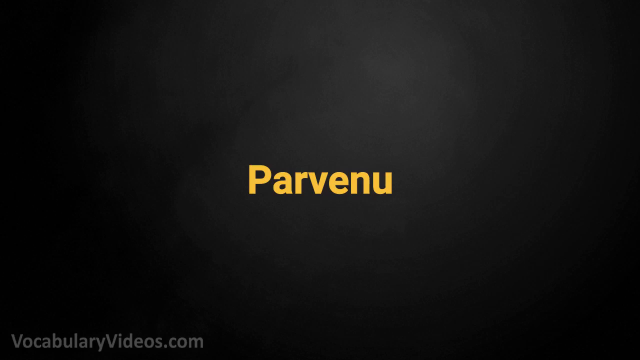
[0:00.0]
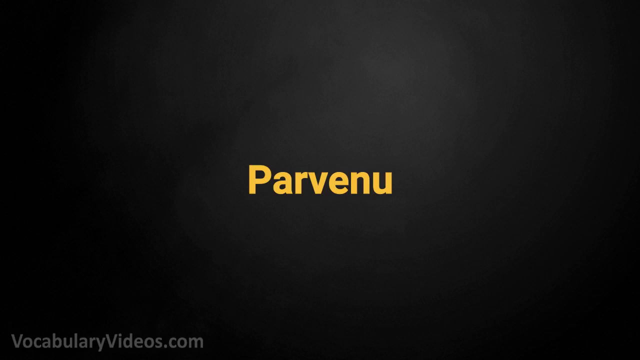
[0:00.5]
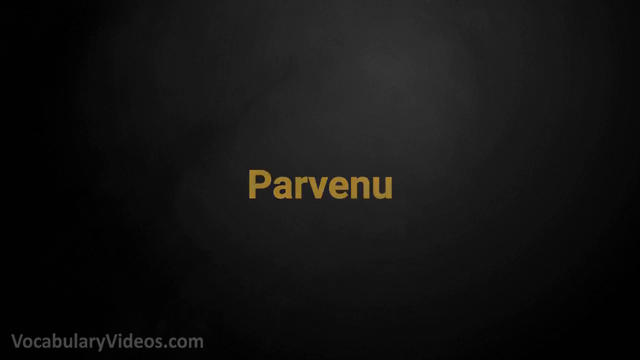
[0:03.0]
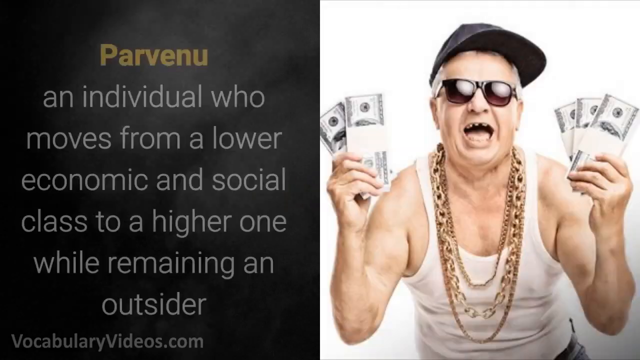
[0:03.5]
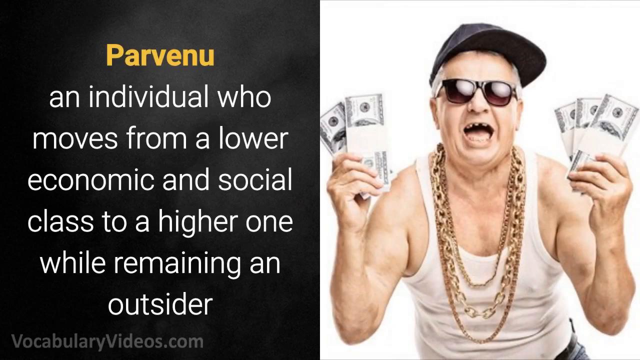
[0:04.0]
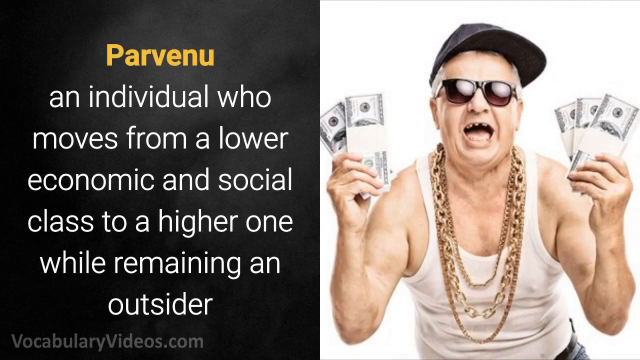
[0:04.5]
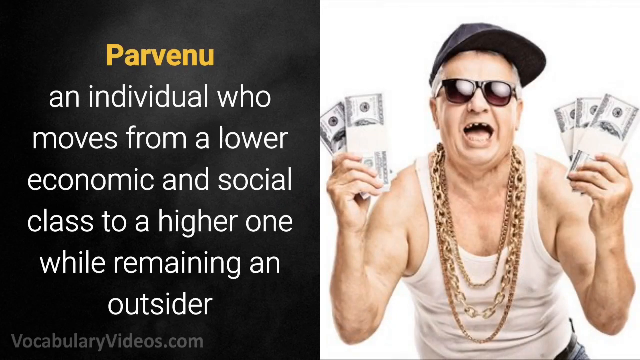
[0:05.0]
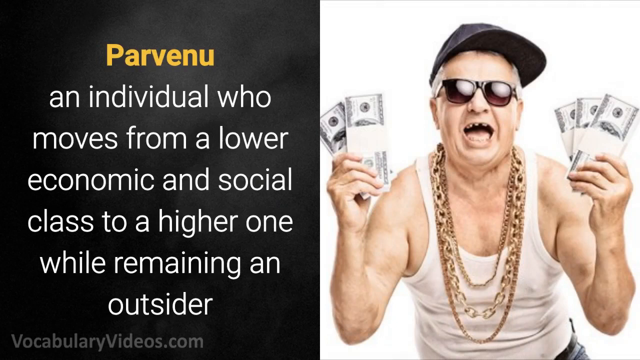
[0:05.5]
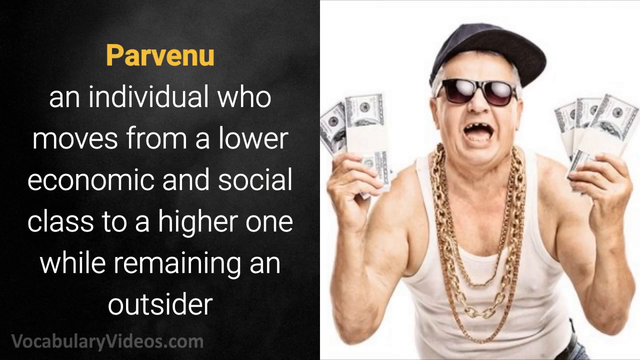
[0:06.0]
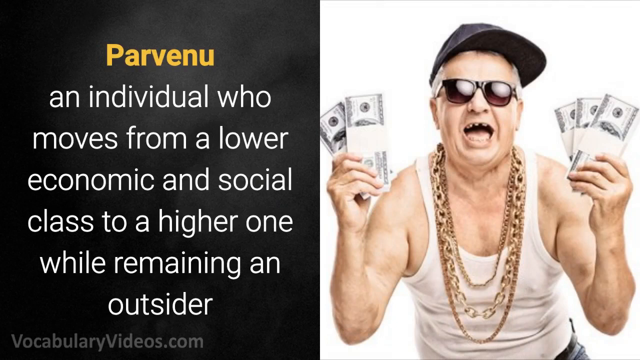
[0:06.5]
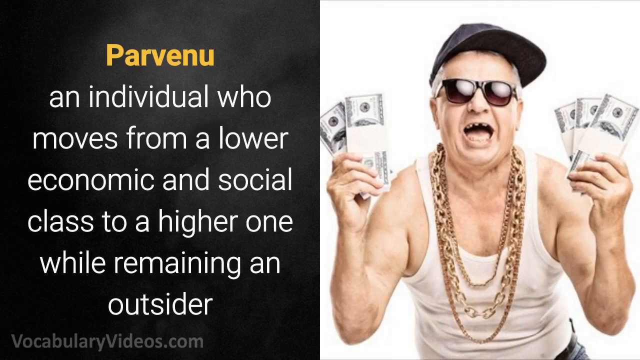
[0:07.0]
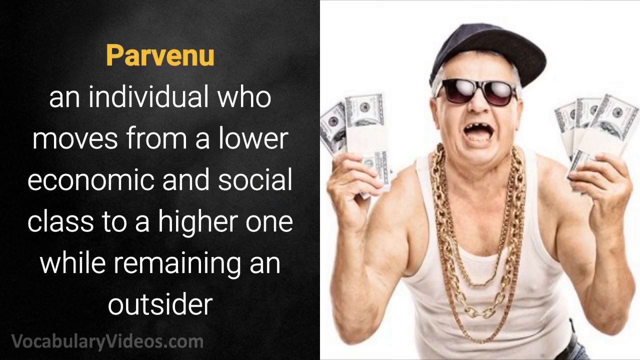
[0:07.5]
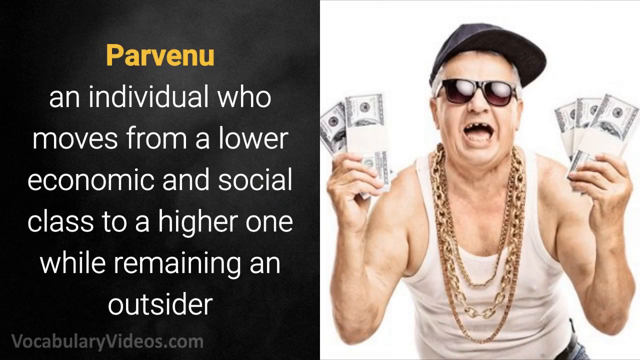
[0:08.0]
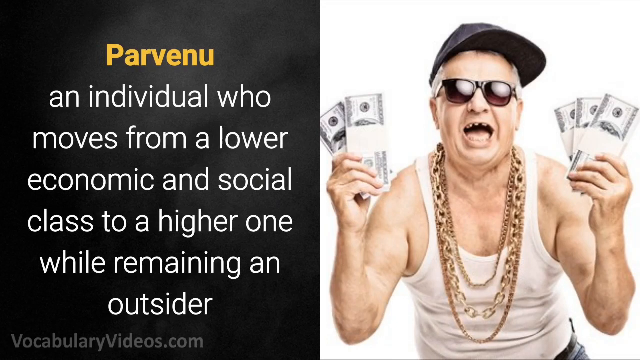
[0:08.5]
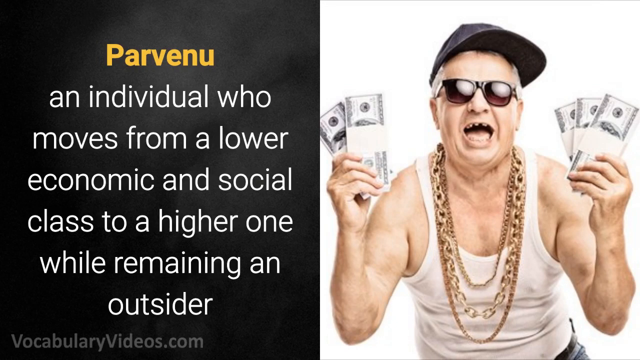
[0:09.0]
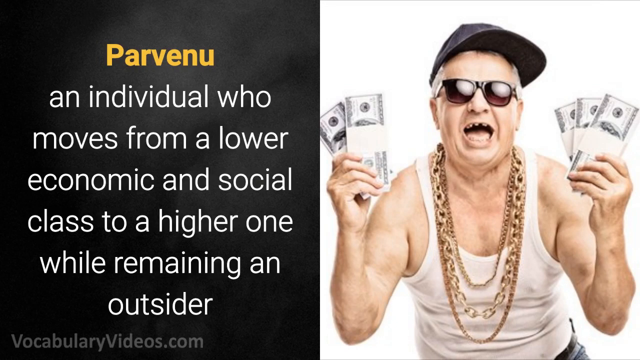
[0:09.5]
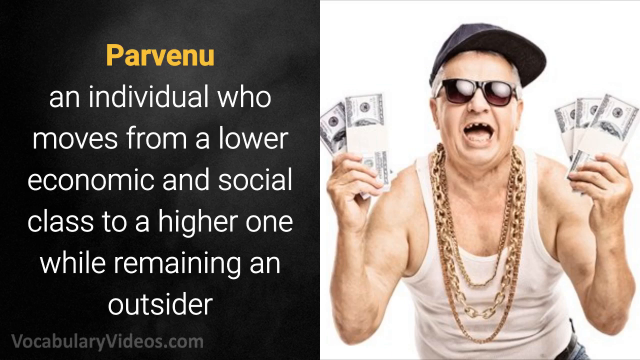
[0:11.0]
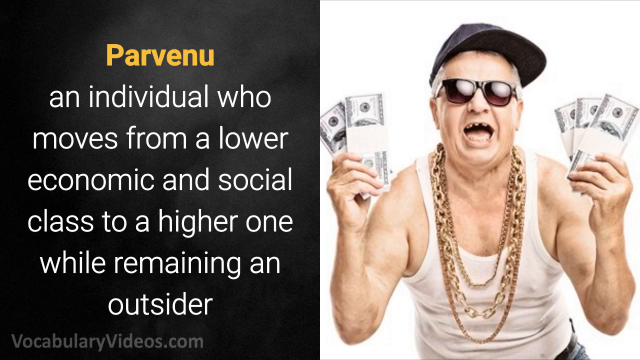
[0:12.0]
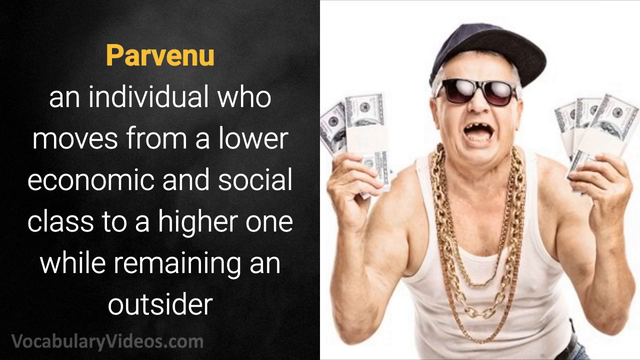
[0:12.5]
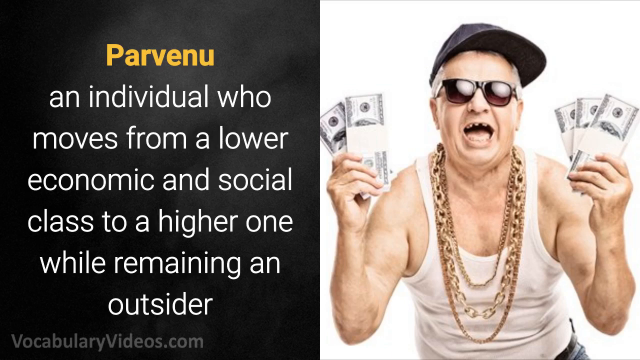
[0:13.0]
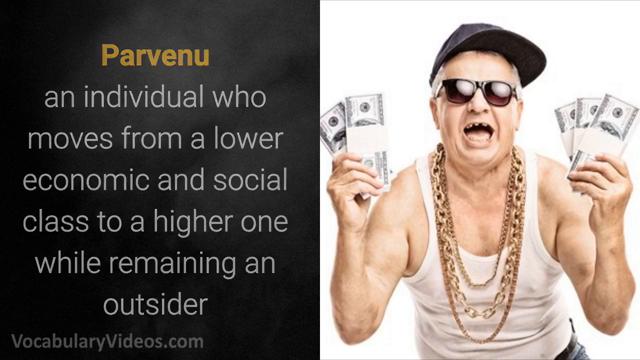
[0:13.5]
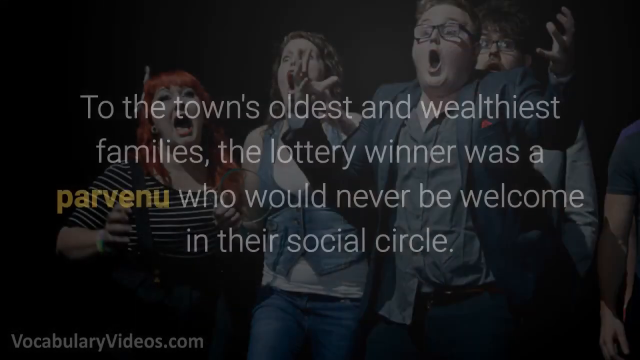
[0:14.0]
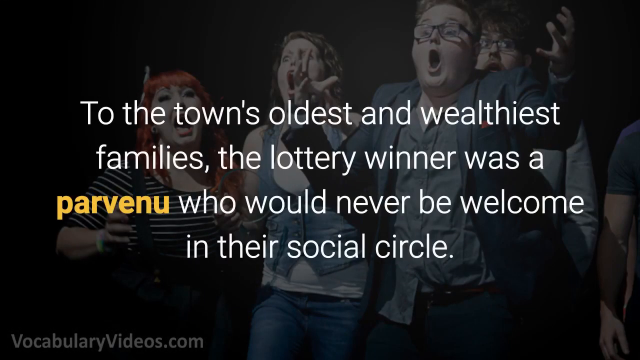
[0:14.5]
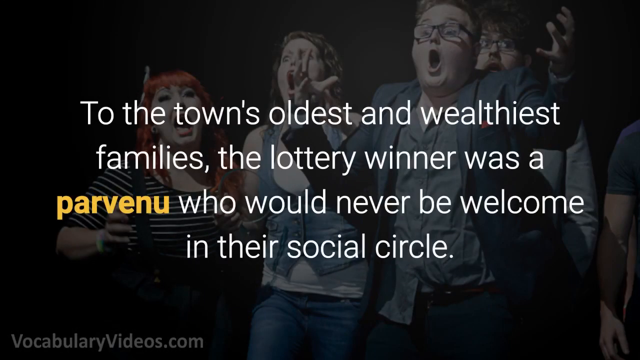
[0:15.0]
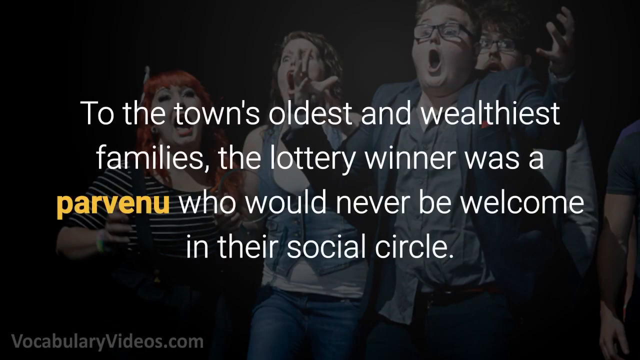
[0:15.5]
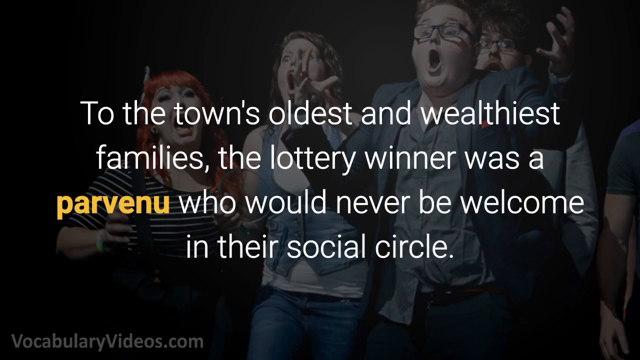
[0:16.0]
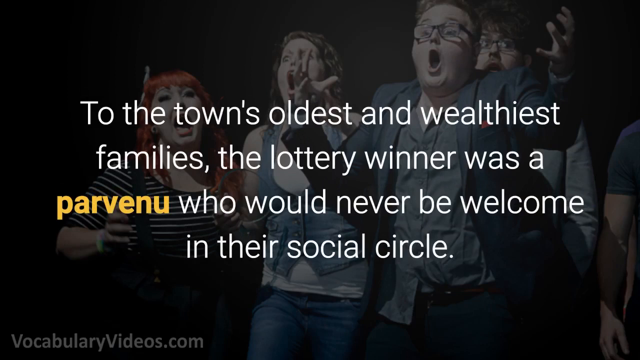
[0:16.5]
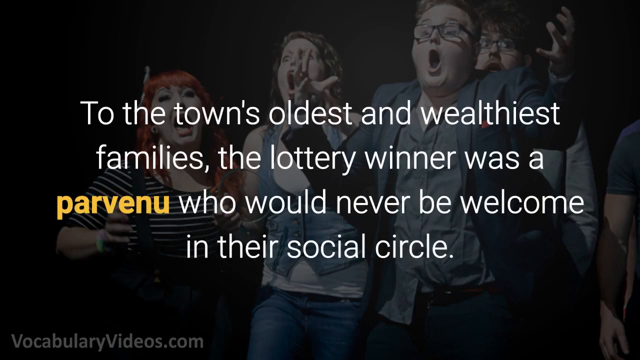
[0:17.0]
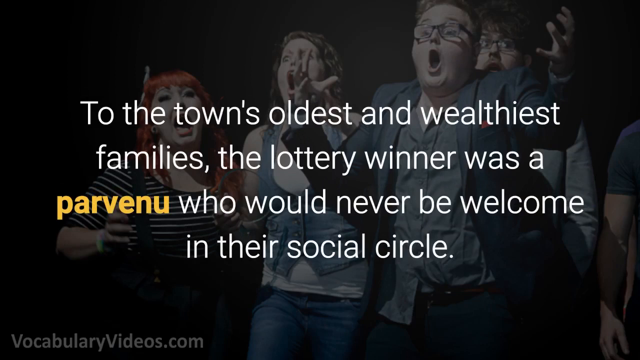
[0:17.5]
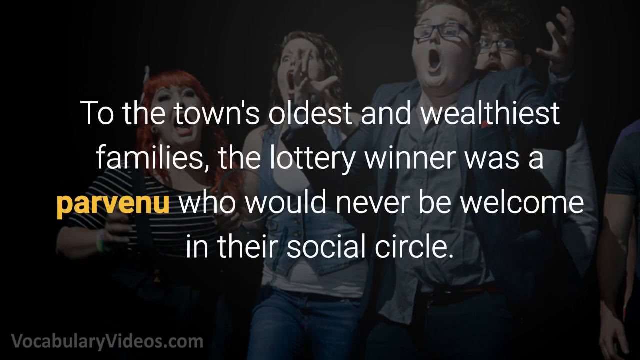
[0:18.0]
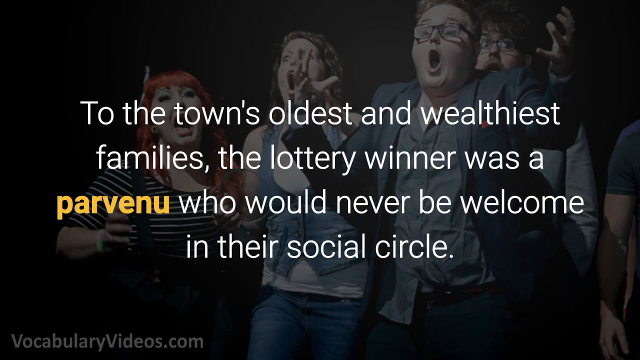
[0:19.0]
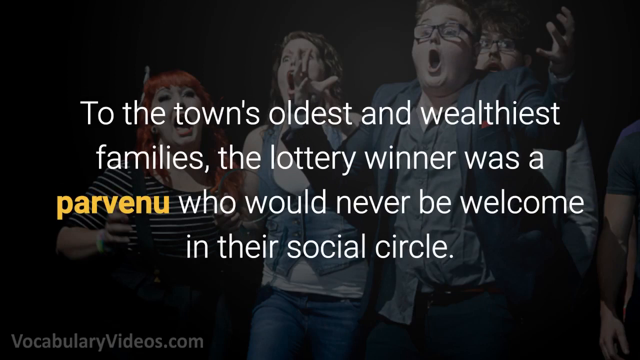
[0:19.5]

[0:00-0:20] The video is an educational tutorial about the word parvenu, spelled P-A-R-V-E-N-U. It defines a parvenu as an individual who moves from a lower economic and social class to a higher one while remaining an outsider, and gives the example that to the town's oldest and wealthiest families, the lottery winner was a parvenu who would never be welcome in their social circle.